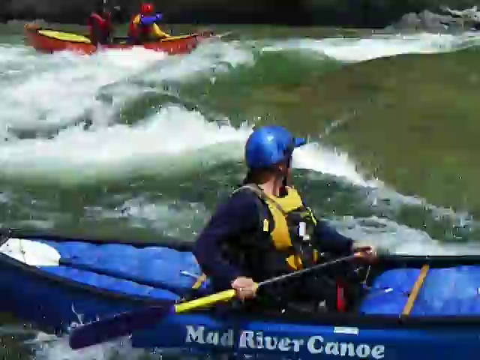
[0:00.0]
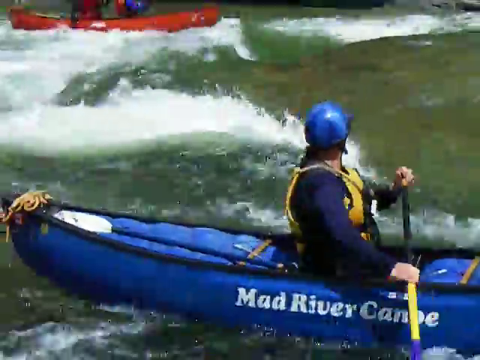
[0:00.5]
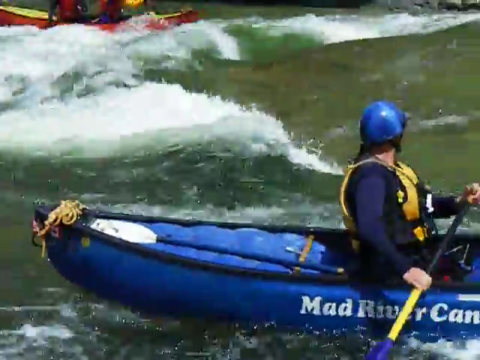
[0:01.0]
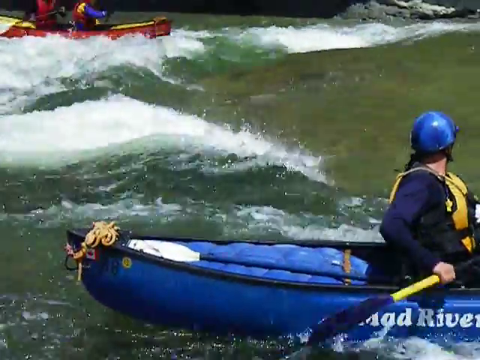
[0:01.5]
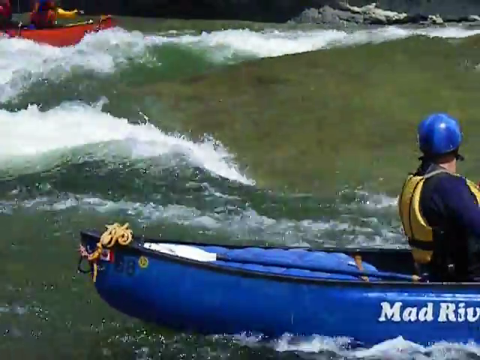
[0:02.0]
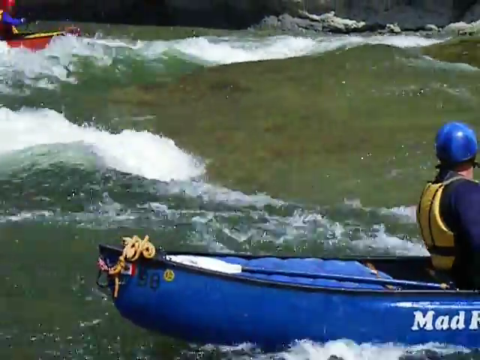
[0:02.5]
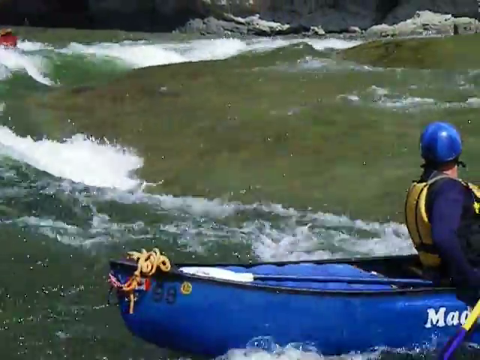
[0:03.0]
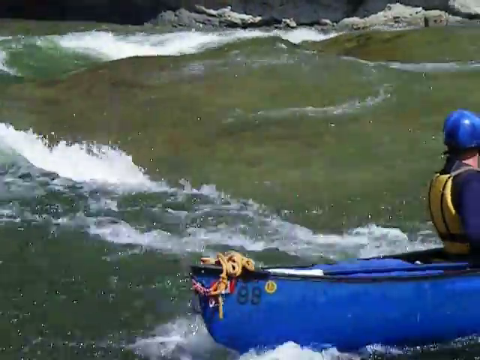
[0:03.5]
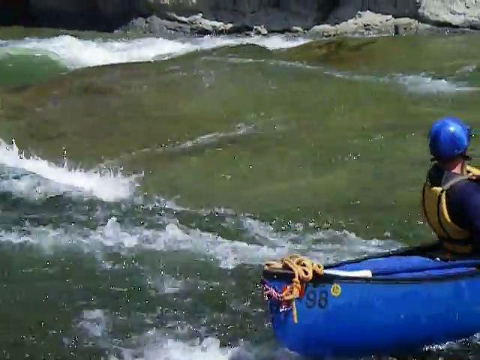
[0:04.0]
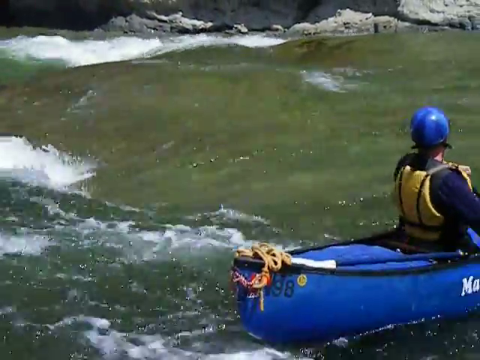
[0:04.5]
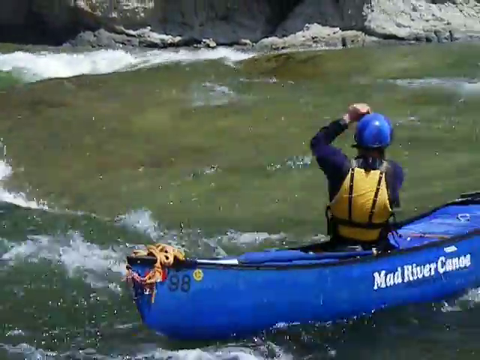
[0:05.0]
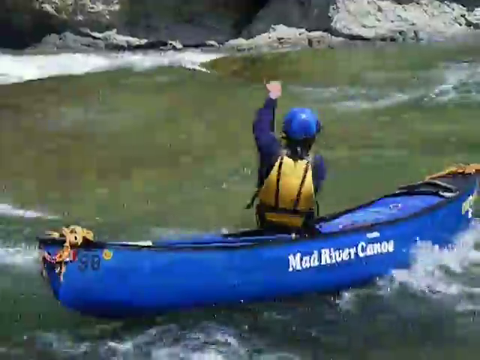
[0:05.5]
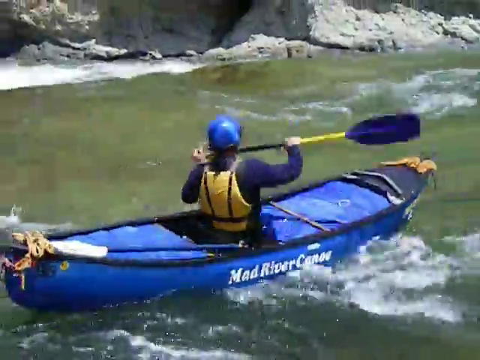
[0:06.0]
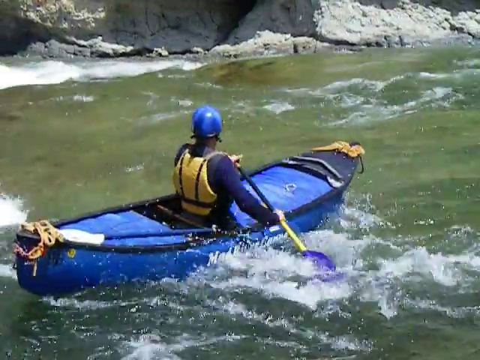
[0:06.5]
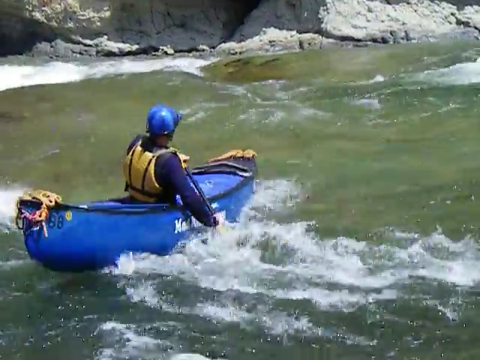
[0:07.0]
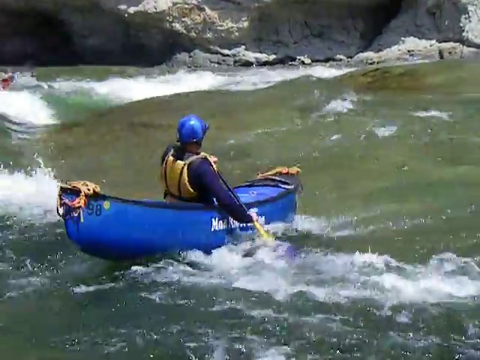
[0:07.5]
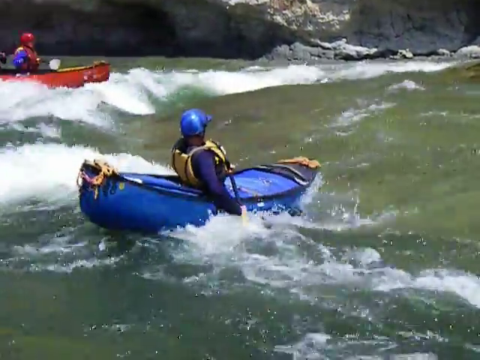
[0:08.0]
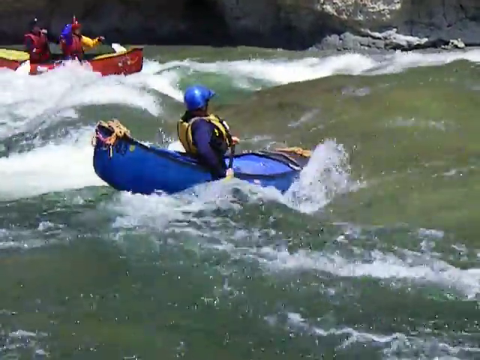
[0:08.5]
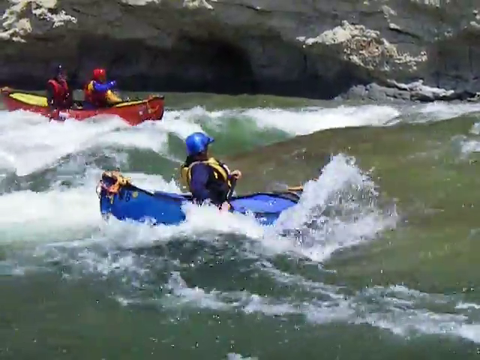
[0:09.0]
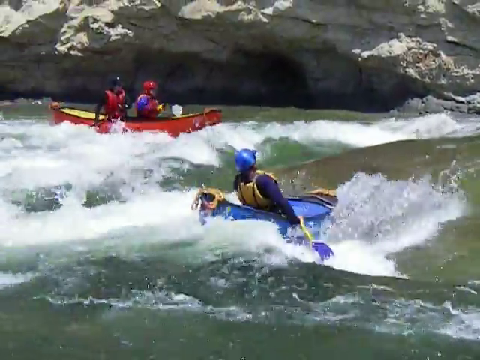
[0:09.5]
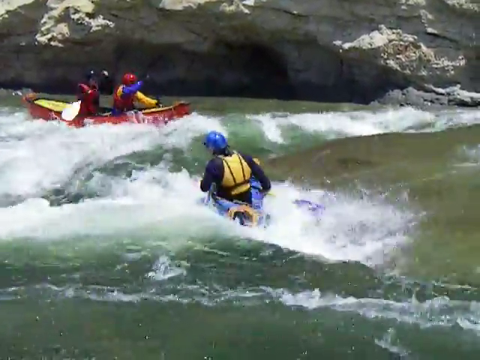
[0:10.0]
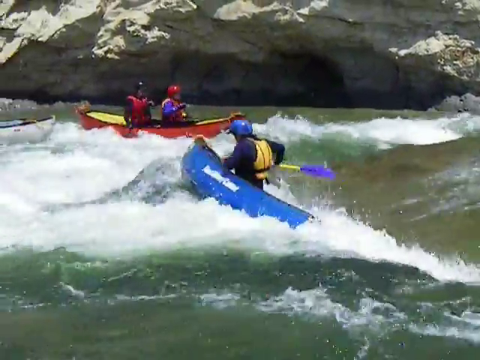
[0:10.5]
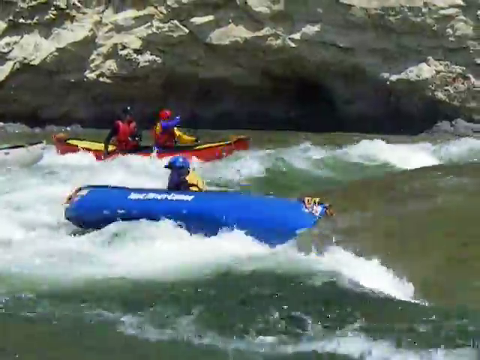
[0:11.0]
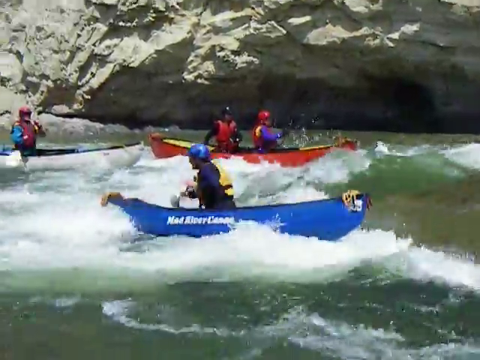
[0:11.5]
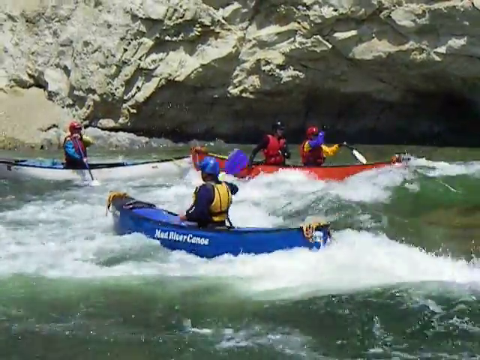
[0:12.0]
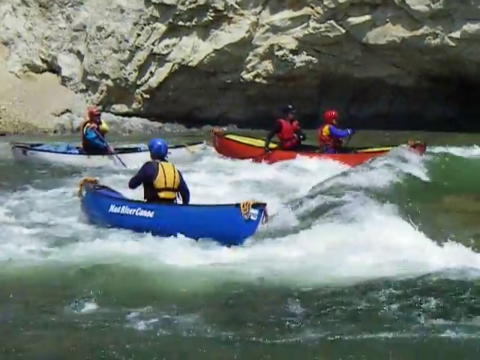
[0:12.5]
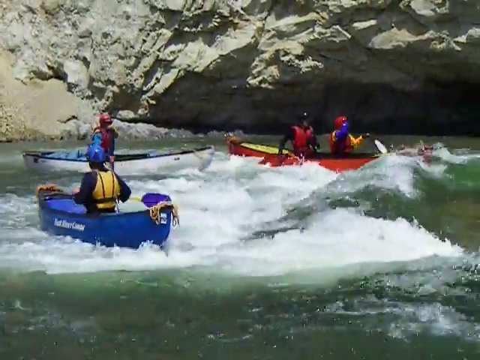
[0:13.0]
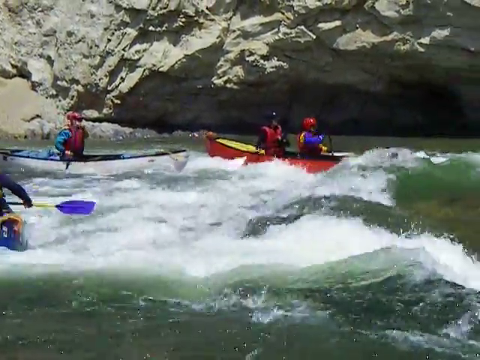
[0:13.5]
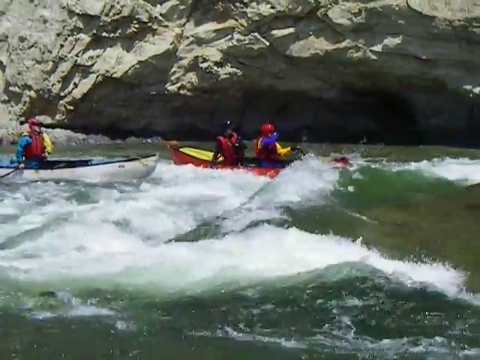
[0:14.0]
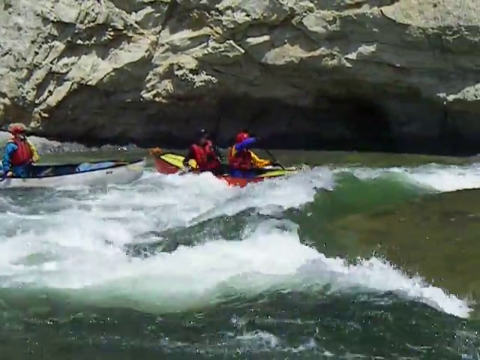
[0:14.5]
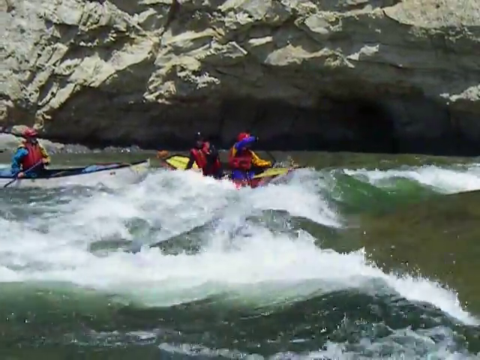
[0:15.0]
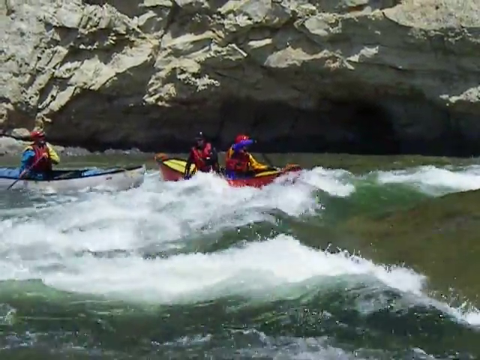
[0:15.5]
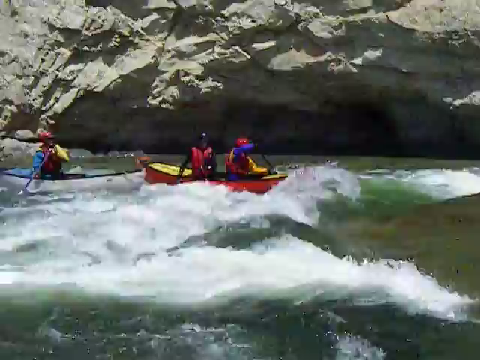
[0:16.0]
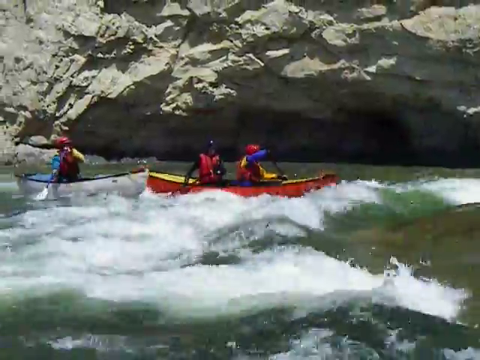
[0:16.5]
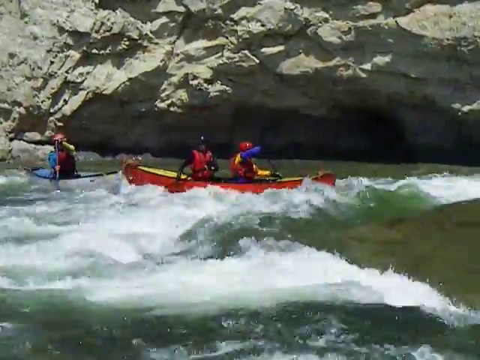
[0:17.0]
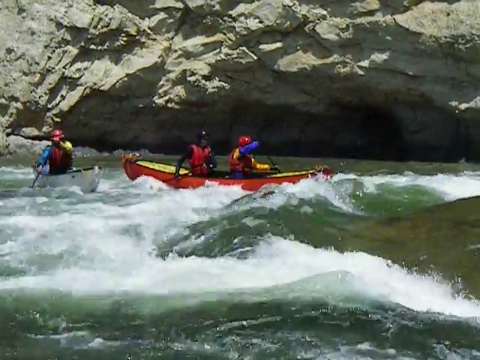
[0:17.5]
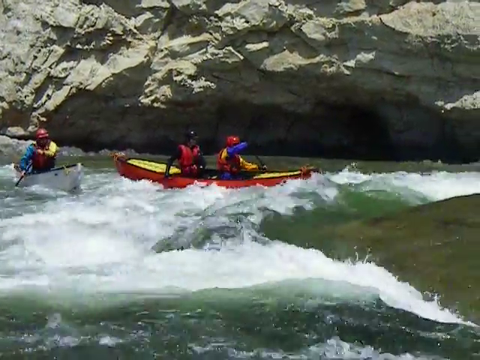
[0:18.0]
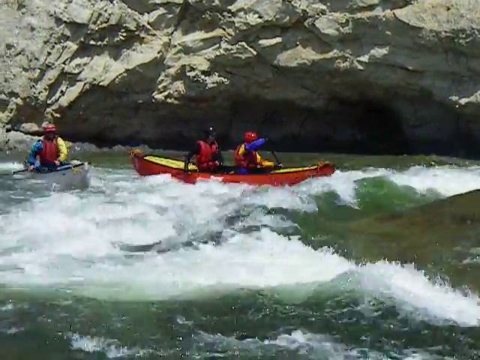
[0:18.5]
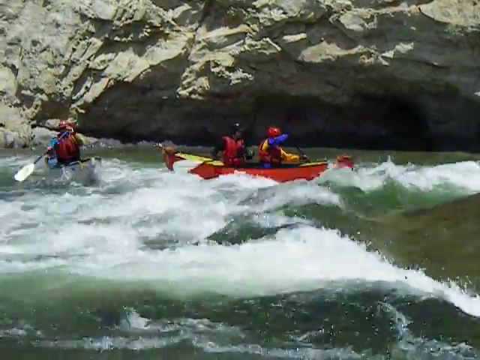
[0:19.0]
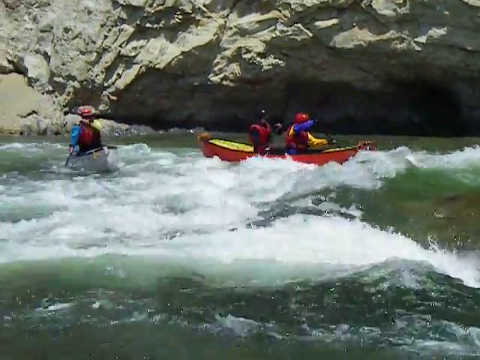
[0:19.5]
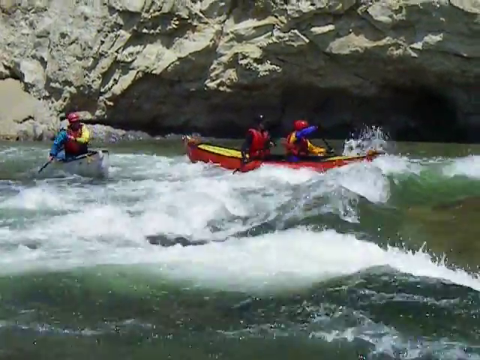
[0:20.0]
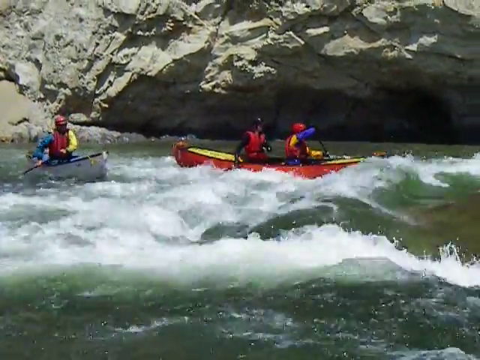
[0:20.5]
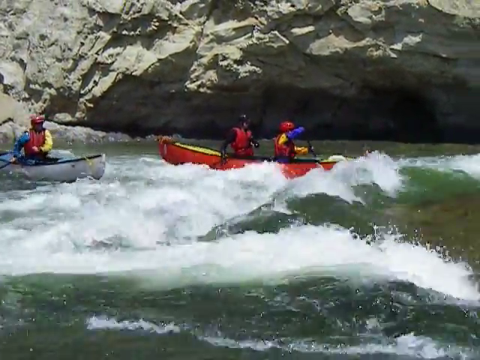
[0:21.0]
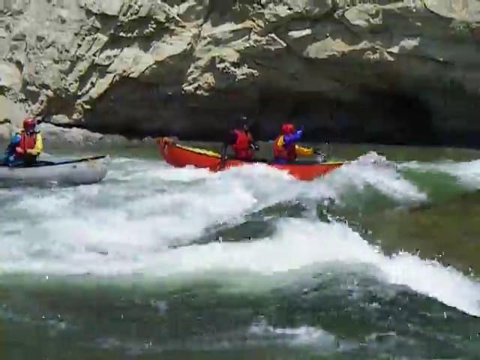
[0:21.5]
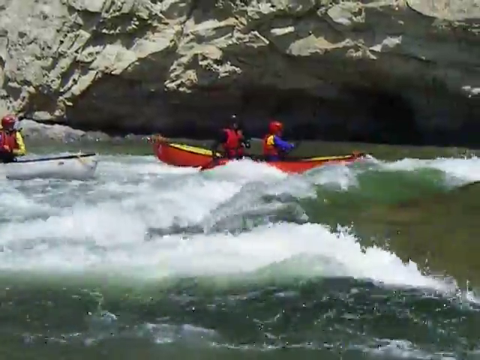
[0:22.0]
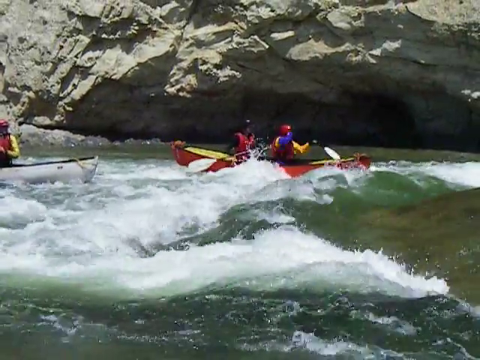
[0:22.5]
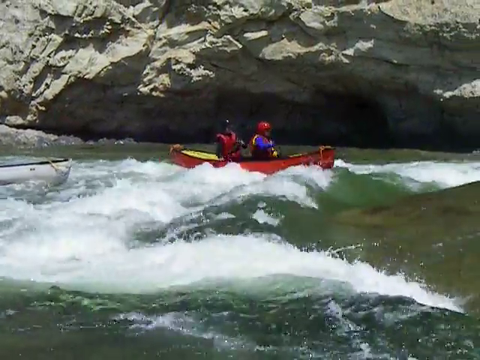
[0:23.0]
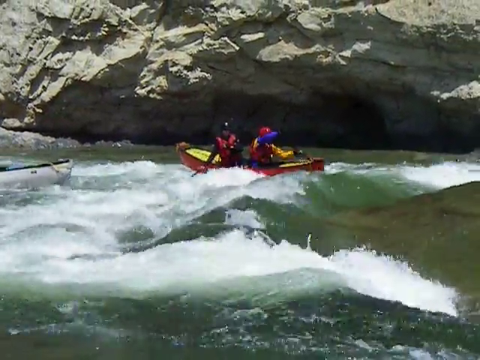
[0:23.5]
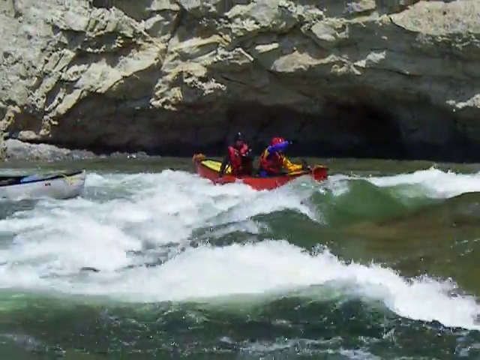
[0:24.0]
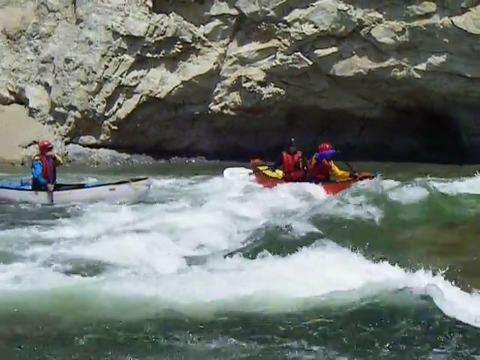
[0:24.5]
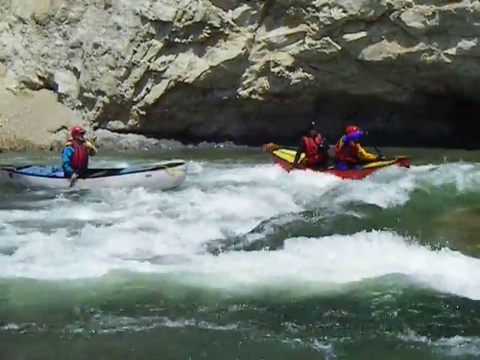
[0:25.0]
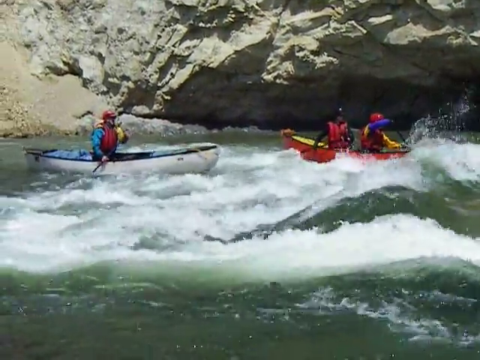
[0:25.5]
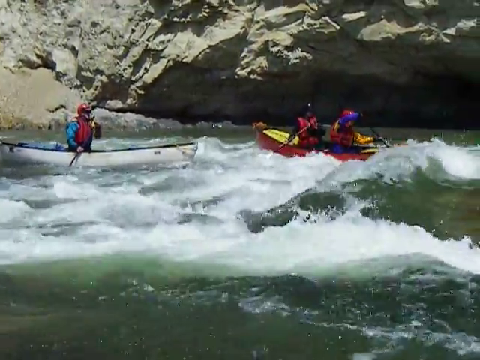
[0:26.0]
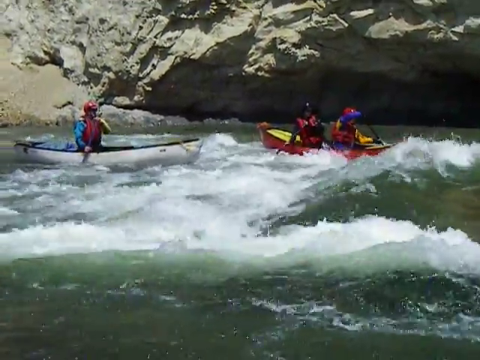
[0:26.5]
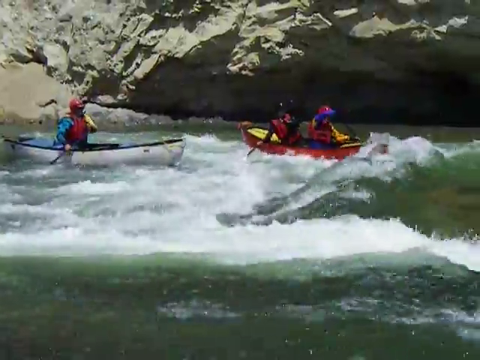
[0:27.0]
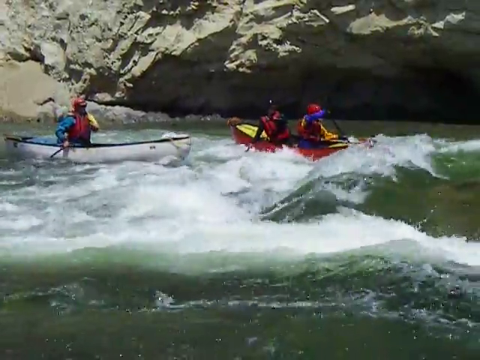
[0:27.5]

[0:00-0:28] In this whitewater canoeing video, a man in a blue kayak is going upstream, then turns around and heads down. A red and yellow kayak with two people in it faces the water coming down the rapids, and they seem to just stay in one place. The blue kayak appears again: he first goes against the current, then turns slightly to the left into a whitewater rapid. The boat with the two people heads into the rapids head-on and stays in one place. There is a white kayak with a single person, and a boat behind him that seems to stay directly behind him without paddling much. A kayaker starts going downstream, gets caught in a small patch of whitewater, and slowly bends to the right as he goes over it. The red boat with the yellow stays put; the person in front wears a red helmet and the person in back wears a black helmet, and they have yellow flotation safety vests on. The kayaker slowly tips to the right and recovers by pushing his paddle down on the floor of the river.